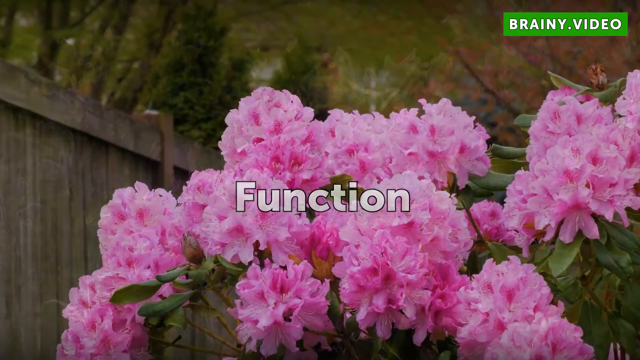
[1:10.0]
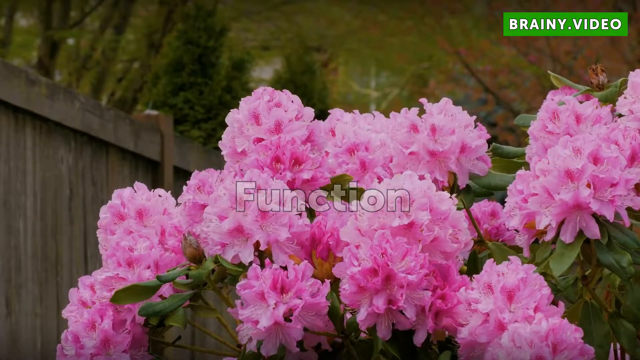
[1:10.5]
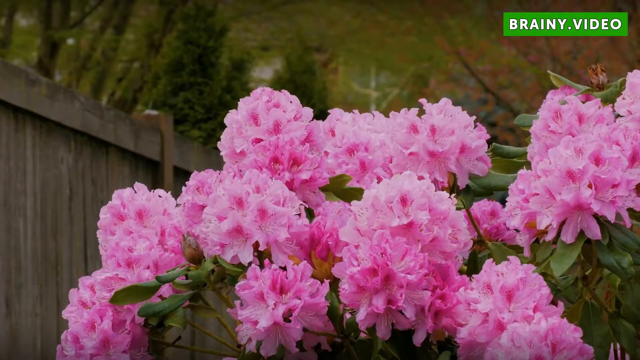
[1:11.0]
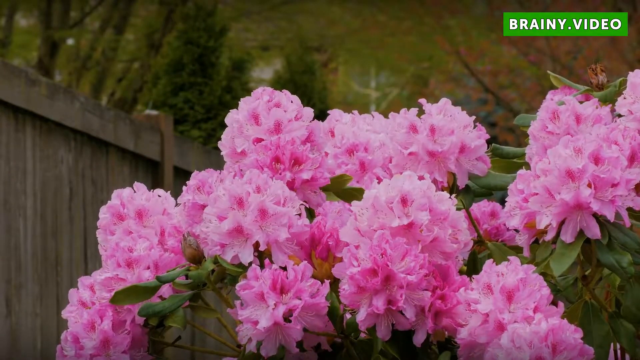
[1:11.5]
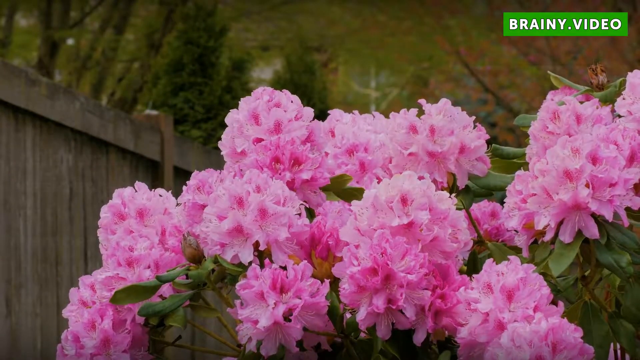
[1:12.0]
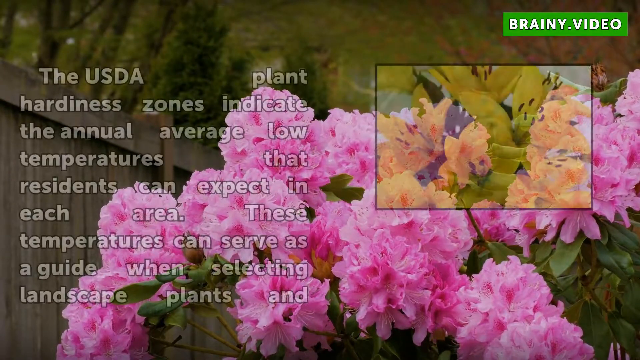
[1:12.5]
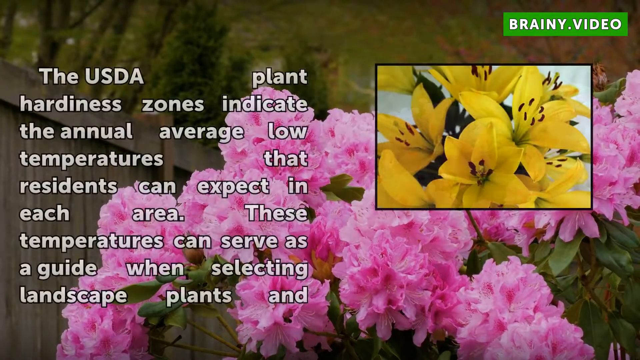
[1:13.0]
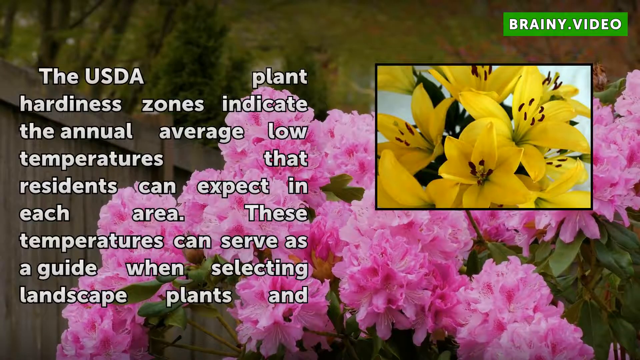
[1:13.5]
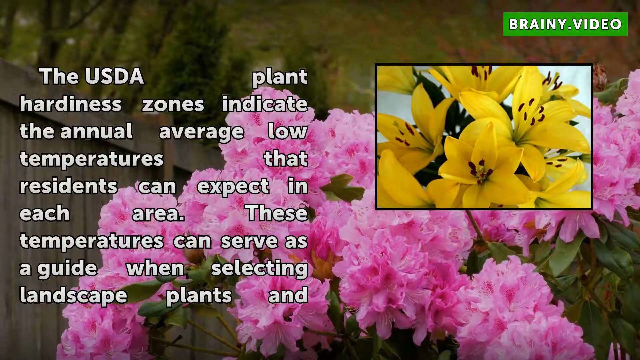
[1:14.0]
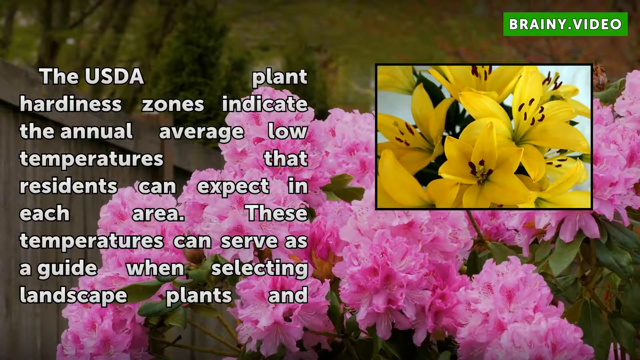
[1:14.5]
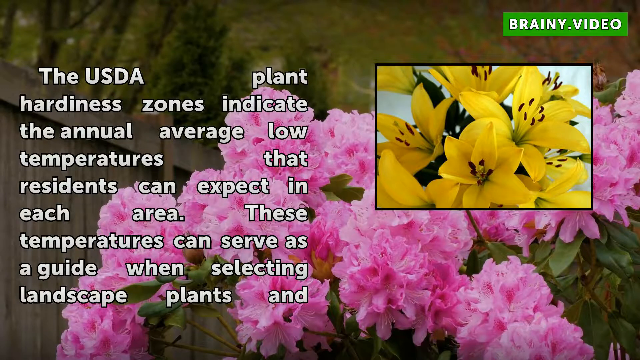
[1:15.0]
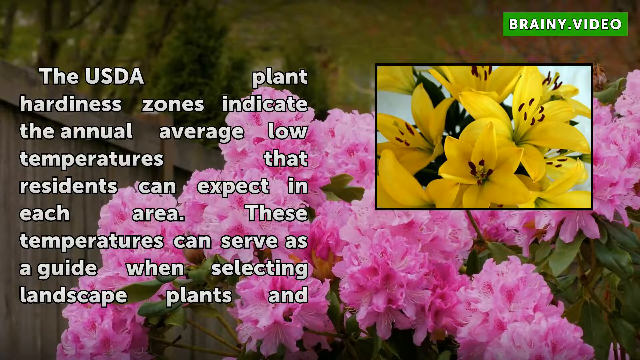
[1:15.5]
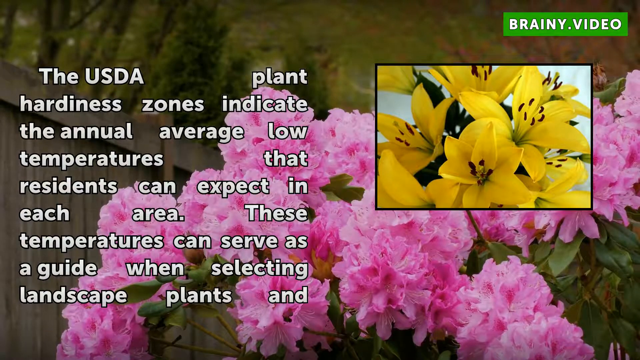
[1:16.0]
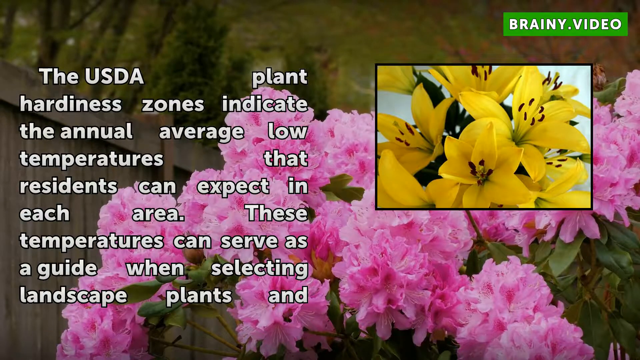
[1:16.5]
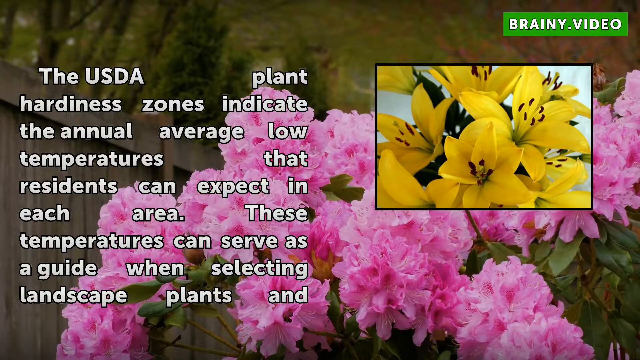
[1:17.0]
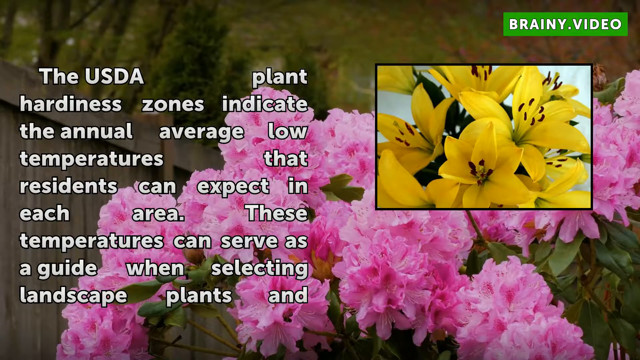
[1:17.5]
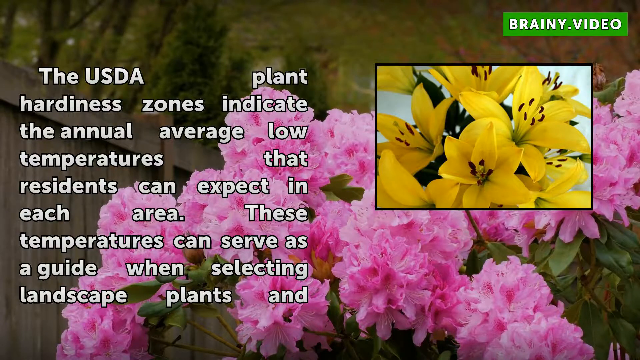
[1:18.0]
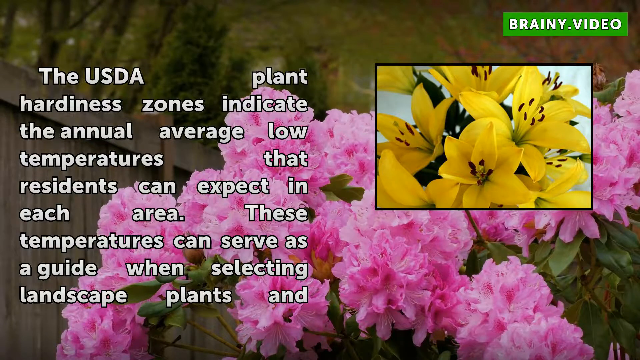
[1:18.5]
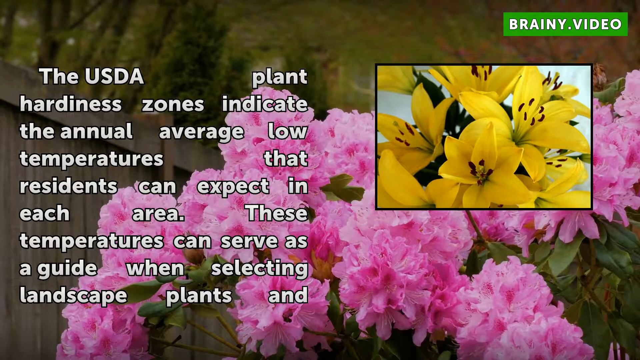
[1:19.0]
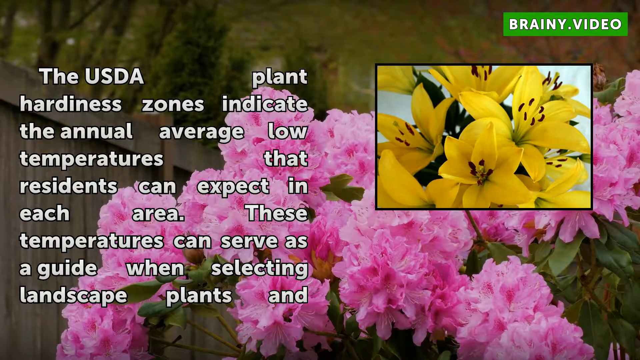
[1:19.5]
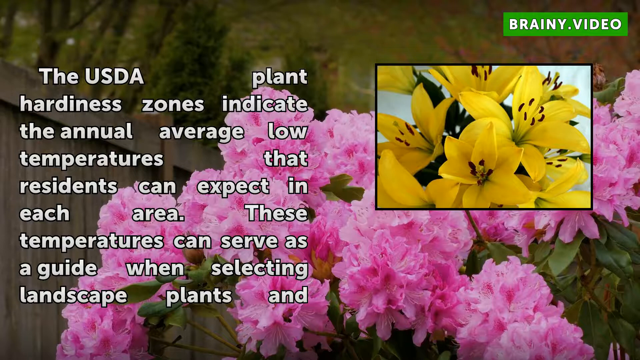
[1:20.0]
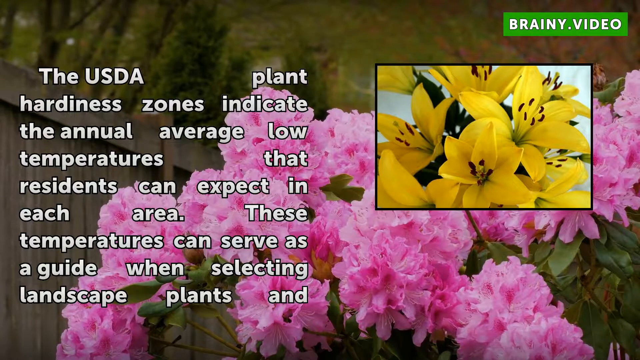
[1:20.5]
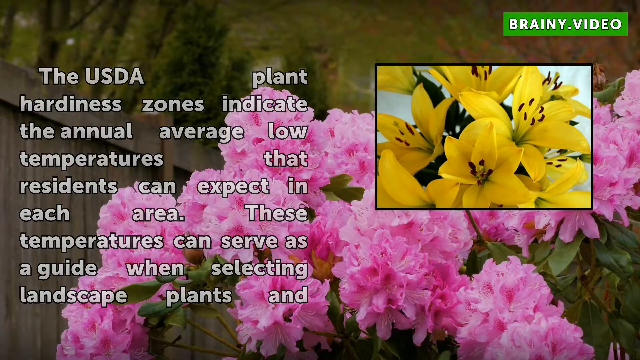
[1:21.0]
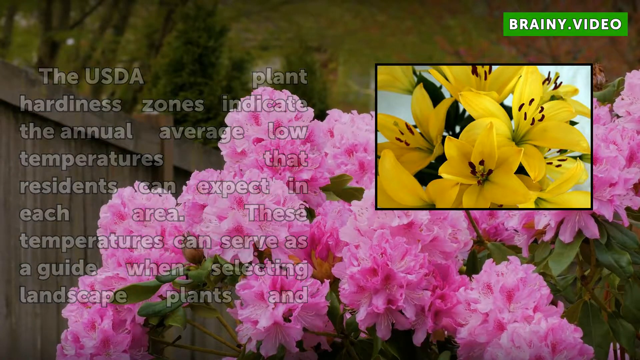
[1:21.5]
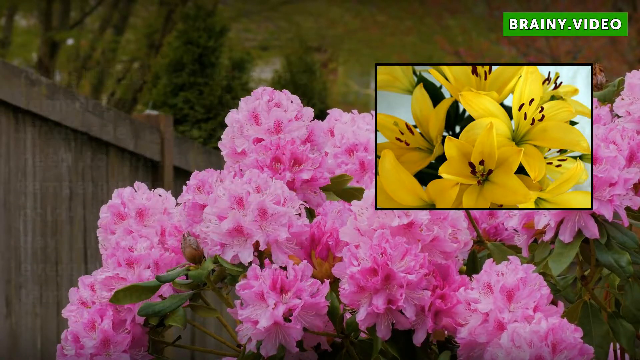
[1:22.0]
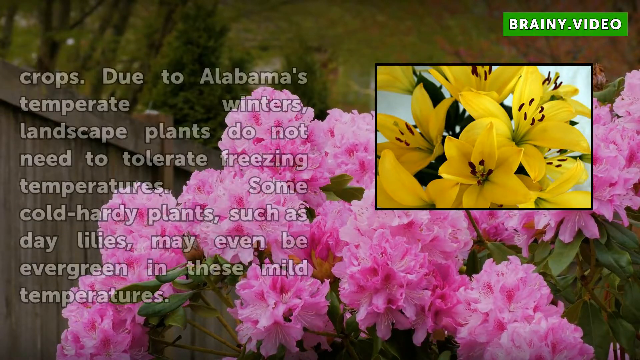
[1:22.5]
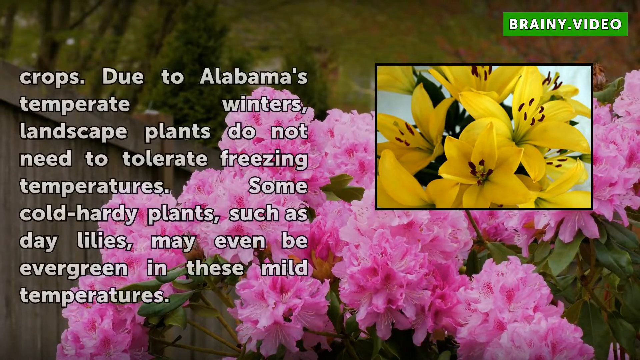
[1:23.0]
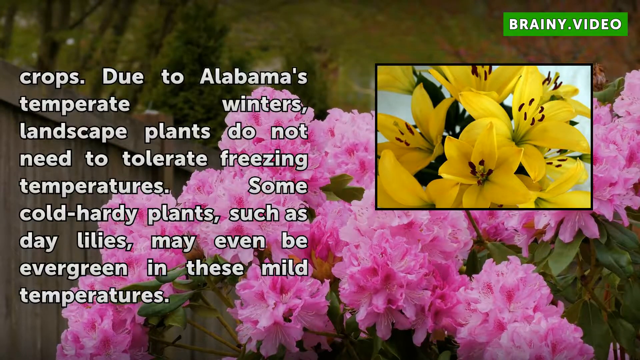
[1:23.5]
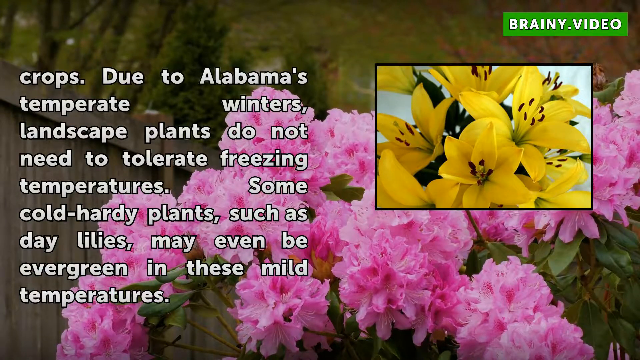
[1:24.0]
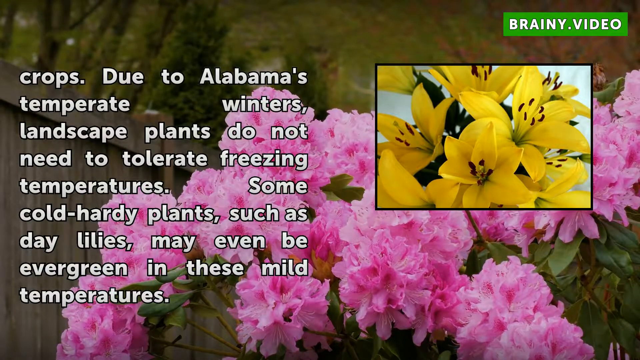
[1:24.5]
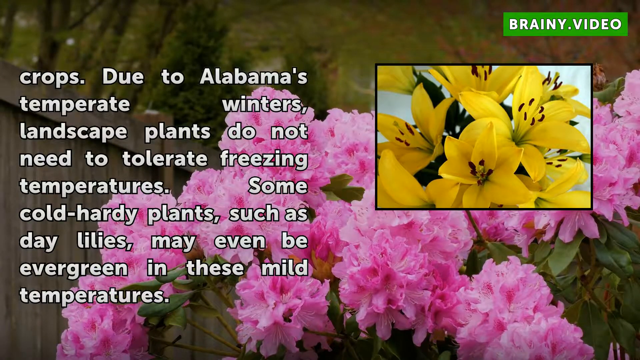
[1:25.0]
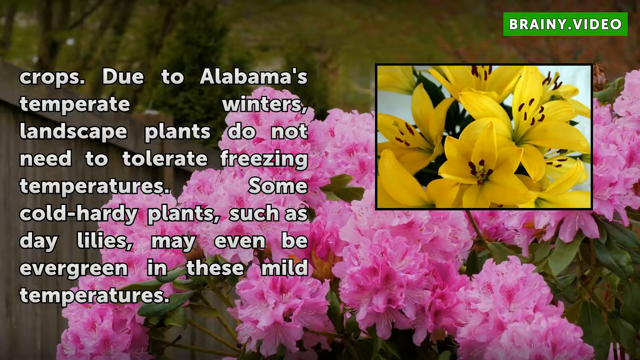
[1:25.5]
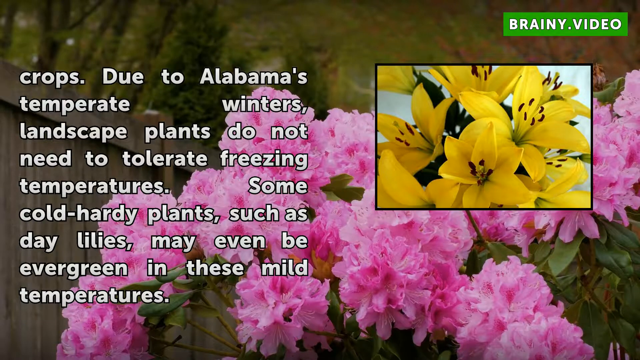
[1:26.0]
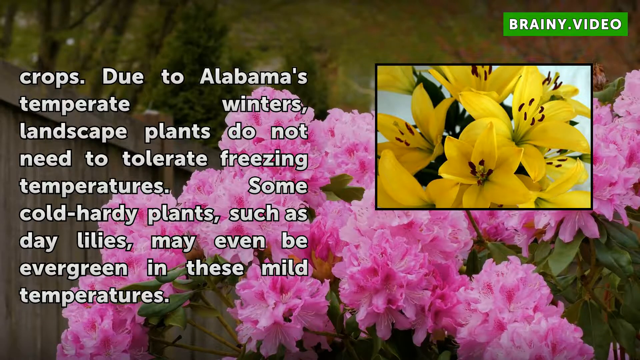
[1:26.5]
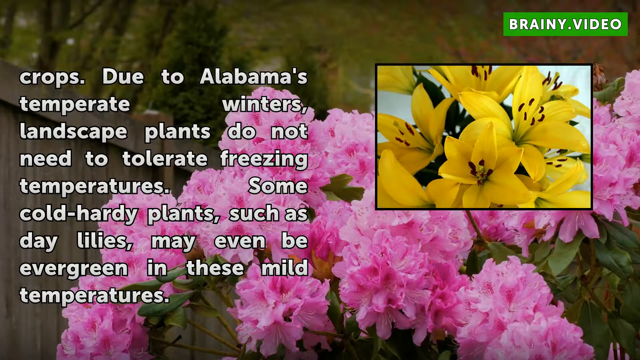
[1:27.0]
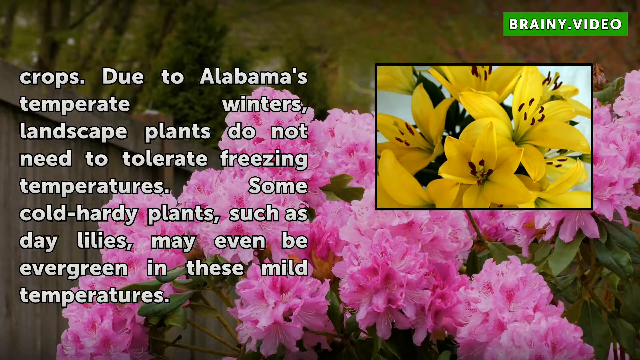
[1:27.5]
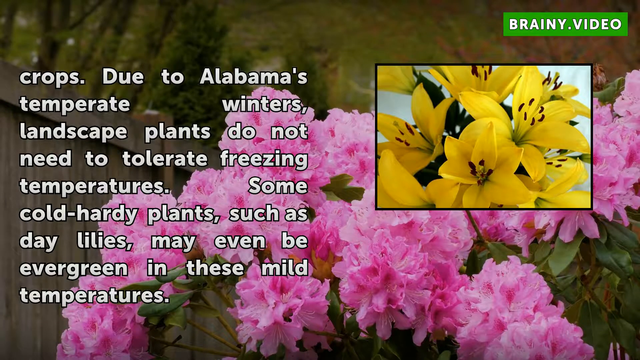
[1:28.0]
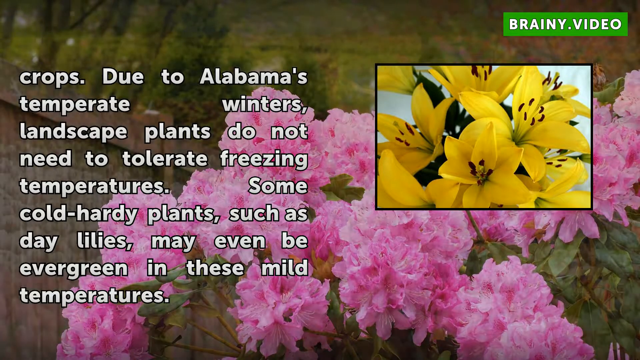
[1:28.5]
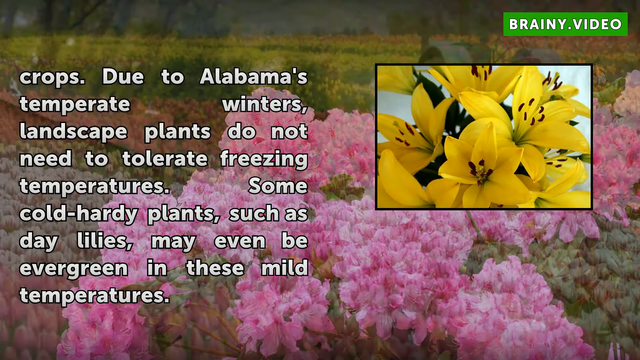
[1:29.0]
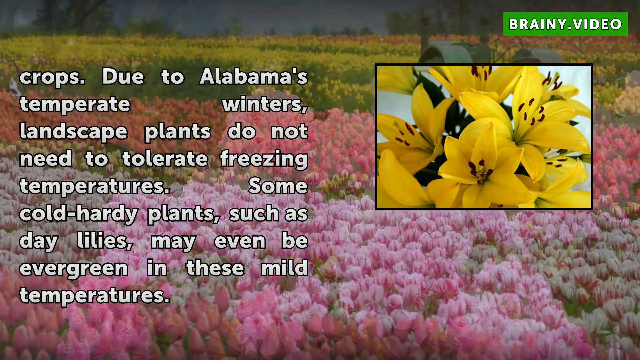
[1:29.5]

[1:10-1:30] Footage shows several clusters of bright pink flowers in the centre of the screen. Behind them is a wooden fence on the left-hand side of the screen, and above the fence are treetops in the background. Over the pink flowers, the word "function" appears in white text. It is replaced by more white text reading "the USDA plant hardiness zones indicate the annual average low temperatures that residents can expect in each area. These temperatures can serve as a guide when selecting landscape plants", and to the right of this text is a small rectangular photograph of bright yellow lilies while the footage of pink flowers lingers in the background. The text then fades away and is replaced by more white text that picks up where the last left off: "crops. Due to Alabama's temperate winters landscape plants do not need to tolerate freezing temperatures. Some cold-hardy plants such as daylilies may even be evergreen in these mild temperatures."